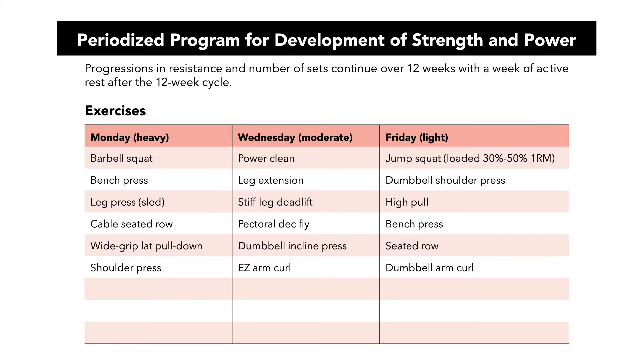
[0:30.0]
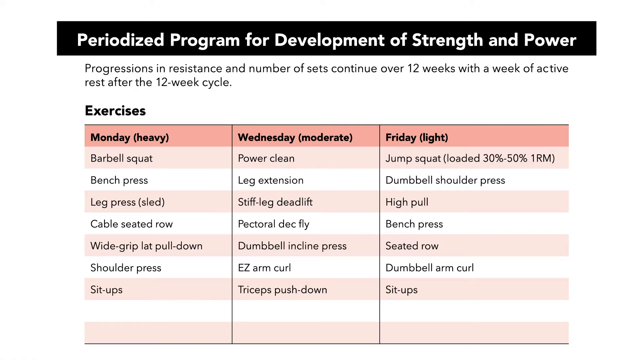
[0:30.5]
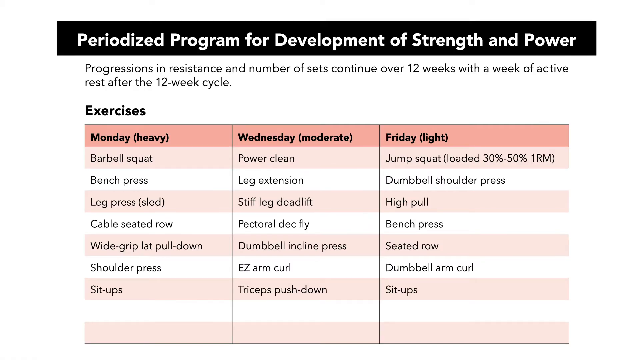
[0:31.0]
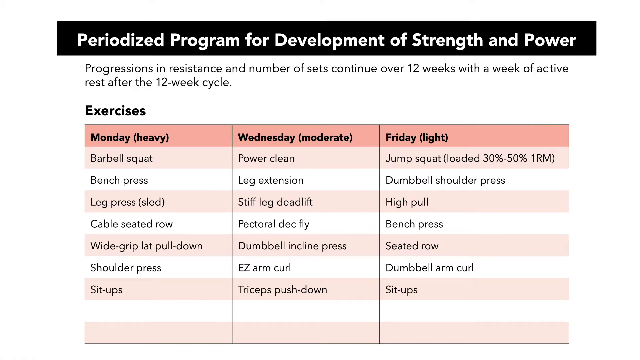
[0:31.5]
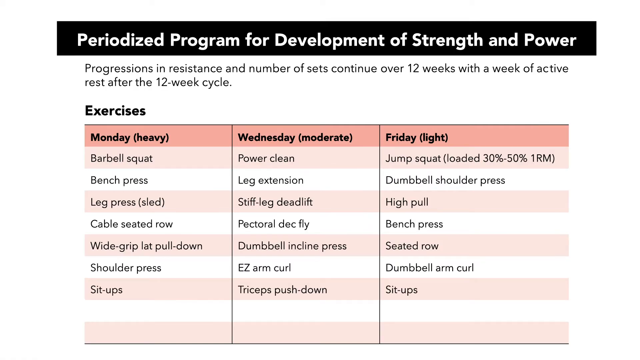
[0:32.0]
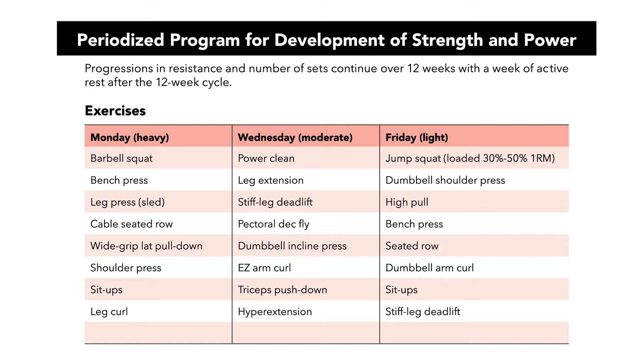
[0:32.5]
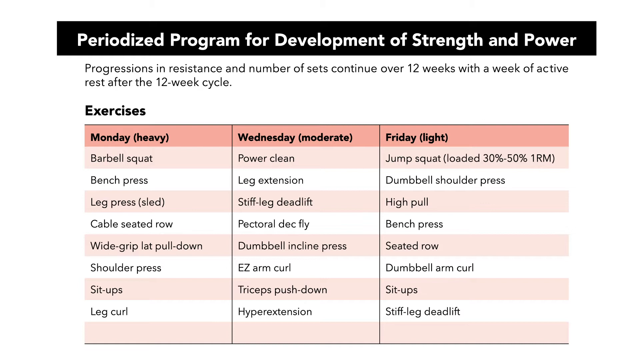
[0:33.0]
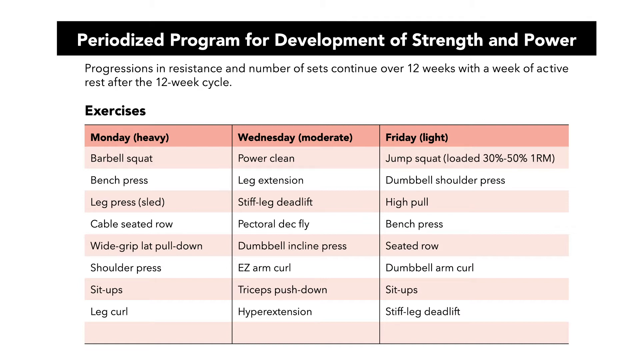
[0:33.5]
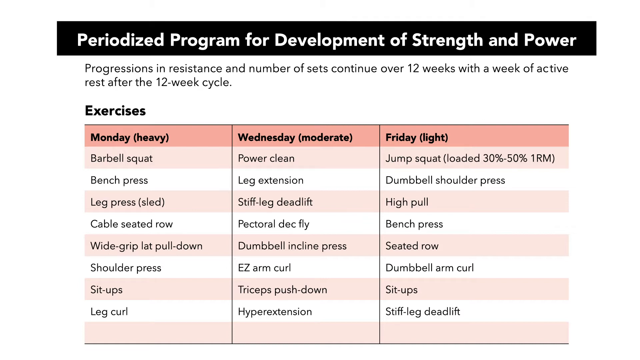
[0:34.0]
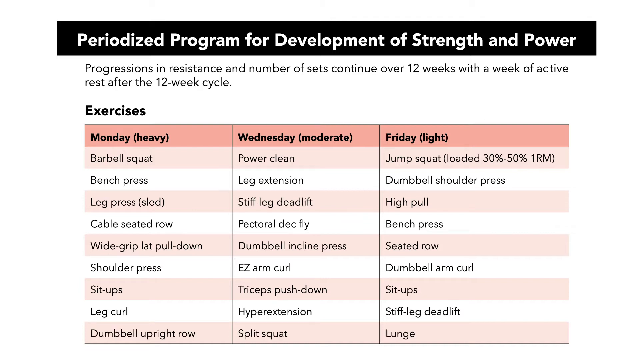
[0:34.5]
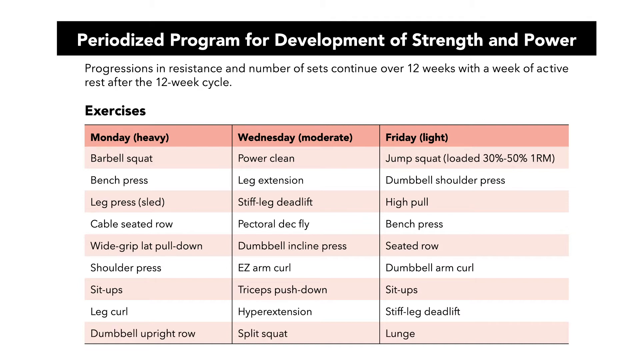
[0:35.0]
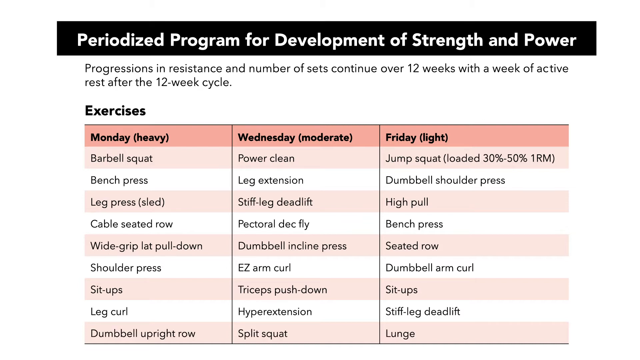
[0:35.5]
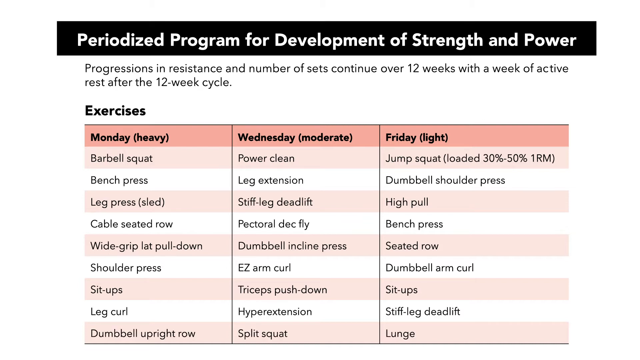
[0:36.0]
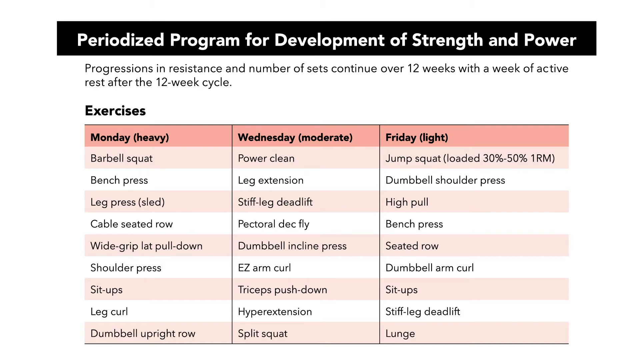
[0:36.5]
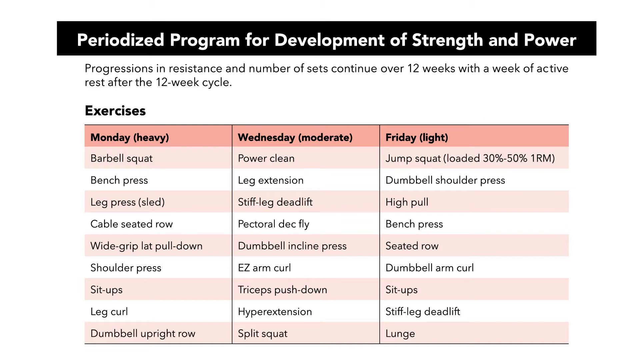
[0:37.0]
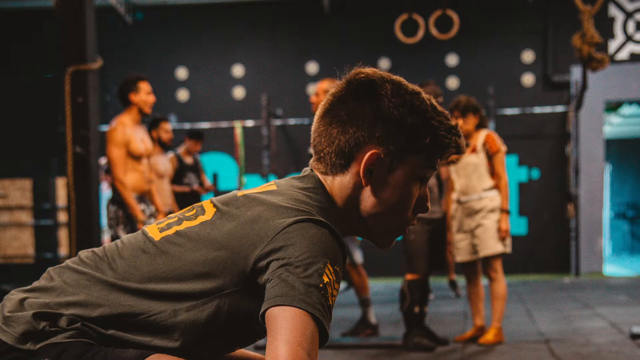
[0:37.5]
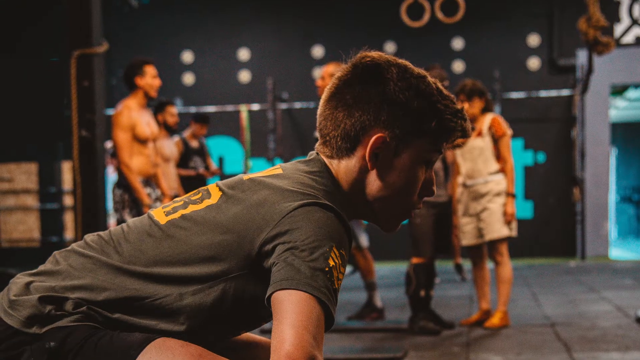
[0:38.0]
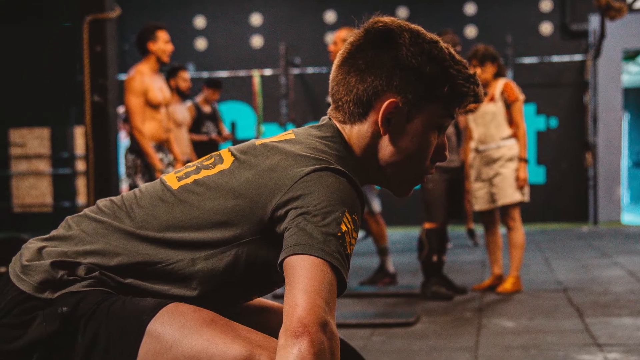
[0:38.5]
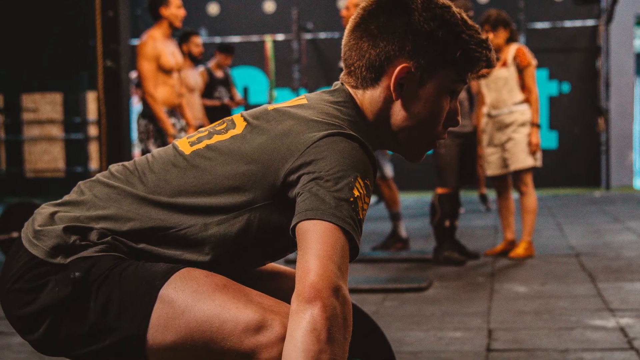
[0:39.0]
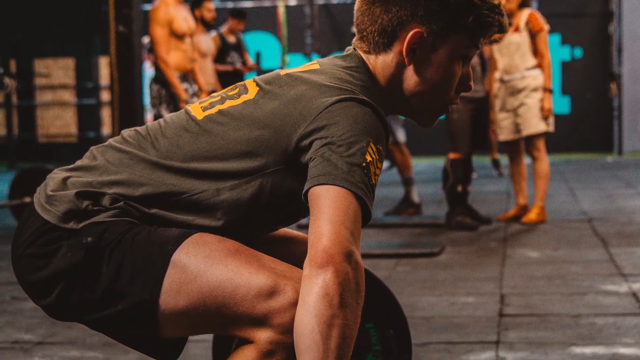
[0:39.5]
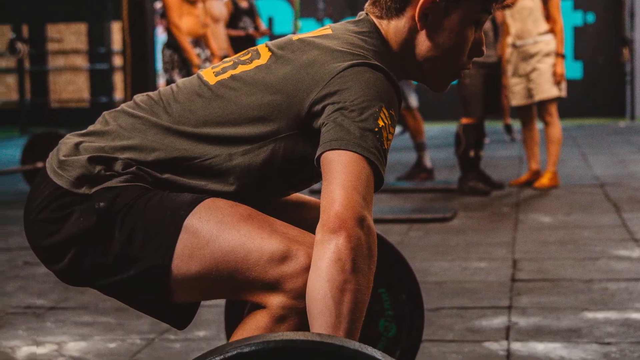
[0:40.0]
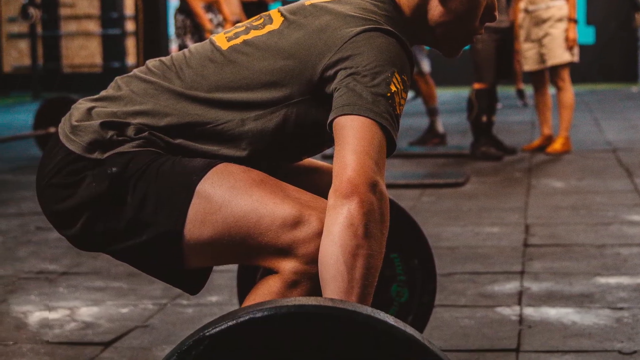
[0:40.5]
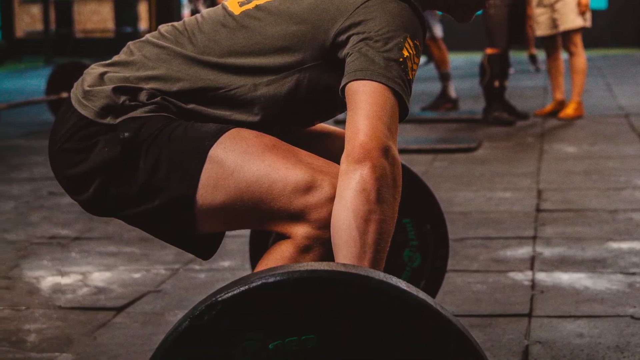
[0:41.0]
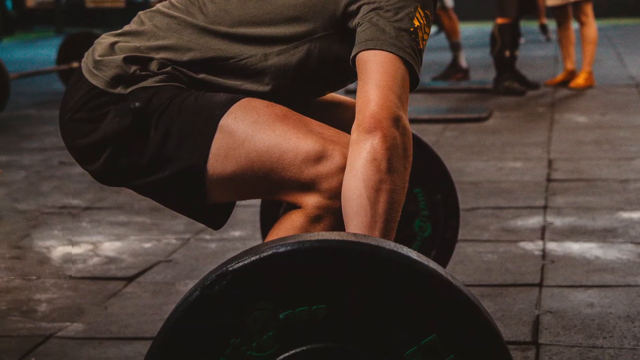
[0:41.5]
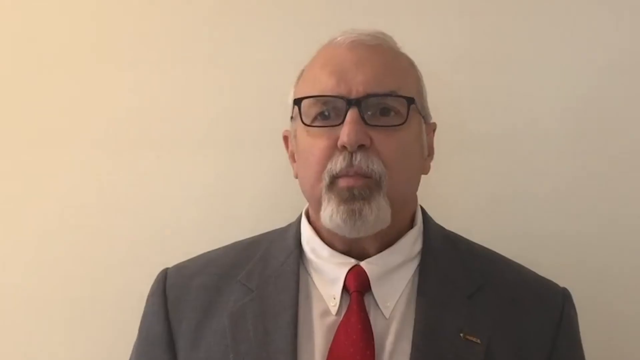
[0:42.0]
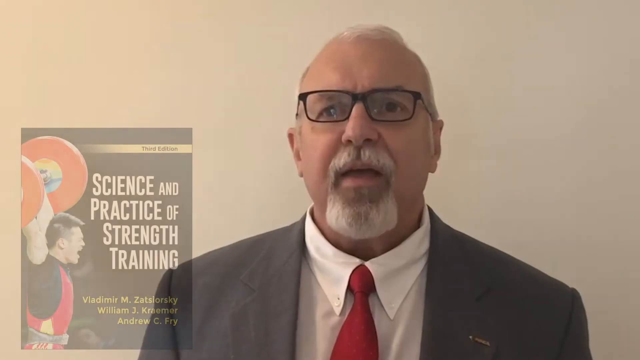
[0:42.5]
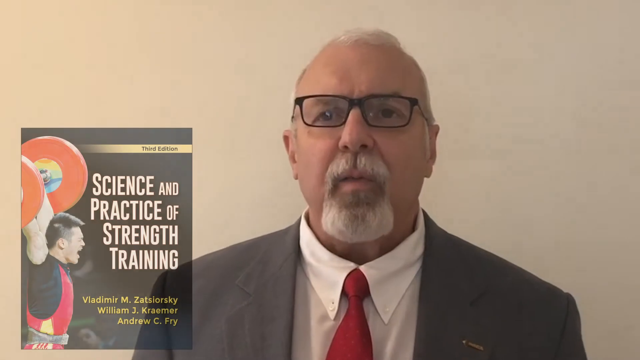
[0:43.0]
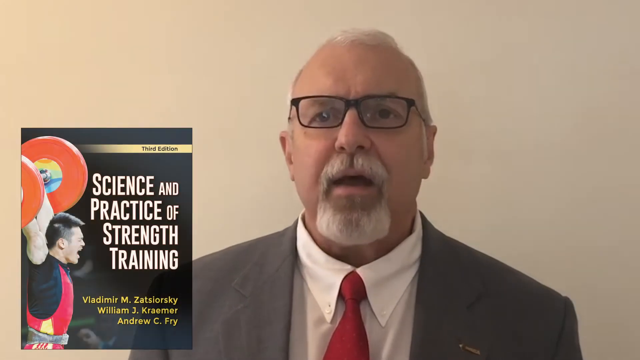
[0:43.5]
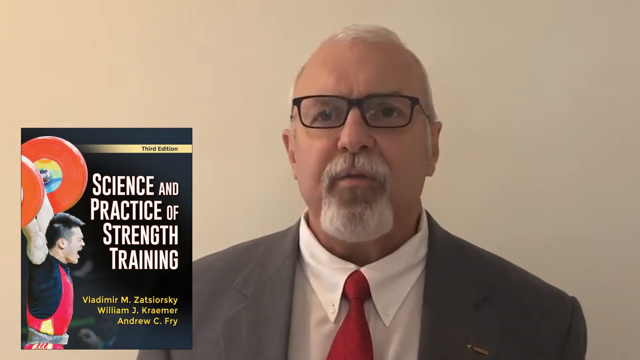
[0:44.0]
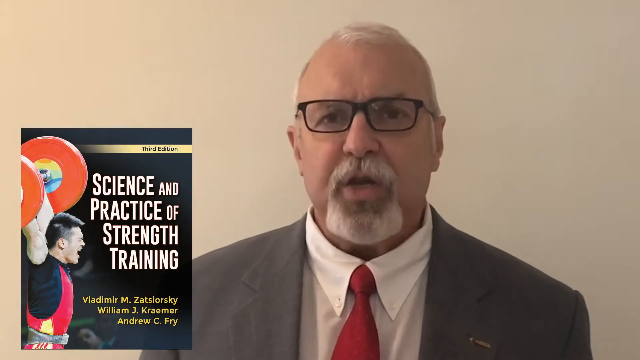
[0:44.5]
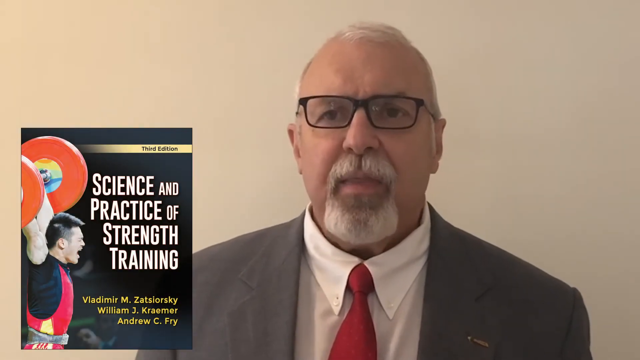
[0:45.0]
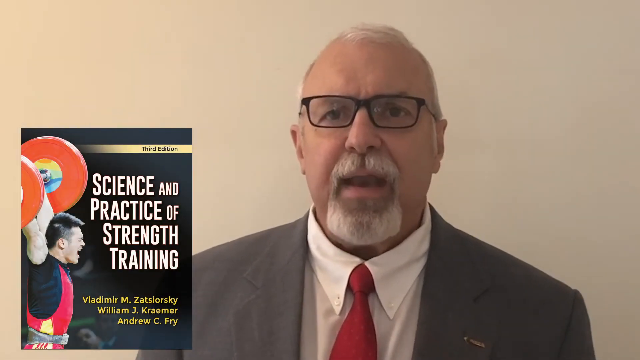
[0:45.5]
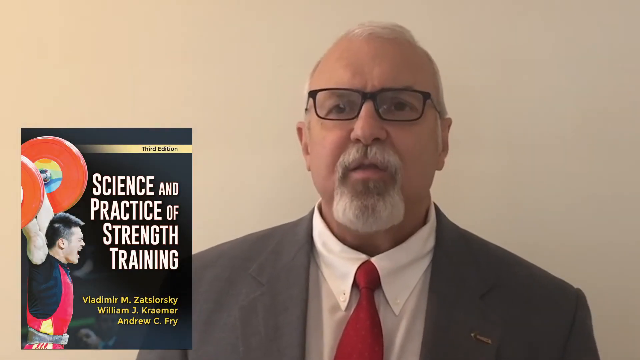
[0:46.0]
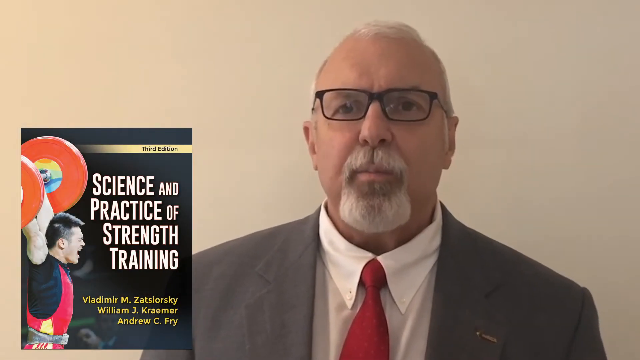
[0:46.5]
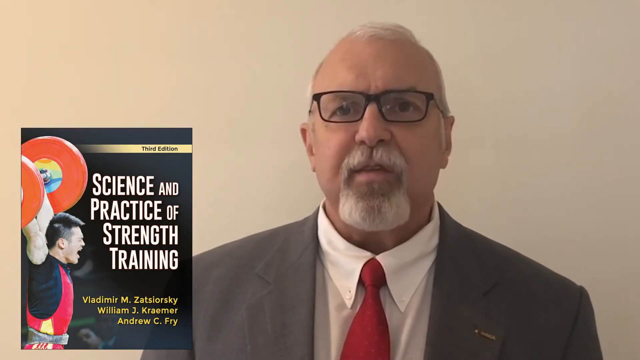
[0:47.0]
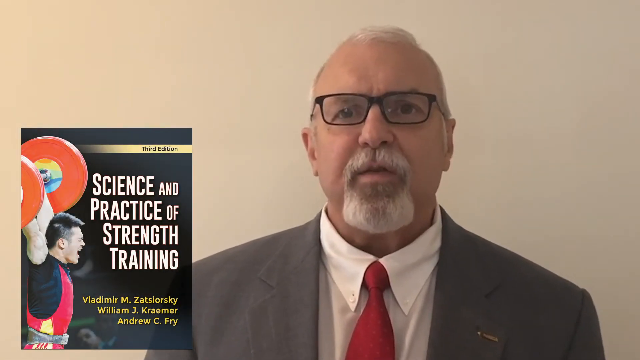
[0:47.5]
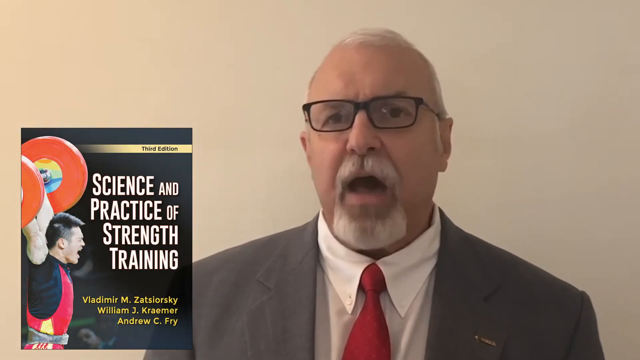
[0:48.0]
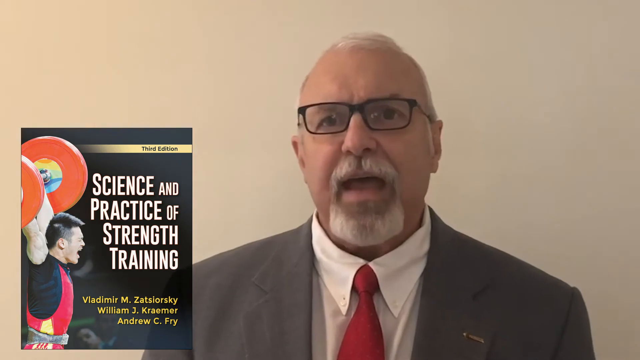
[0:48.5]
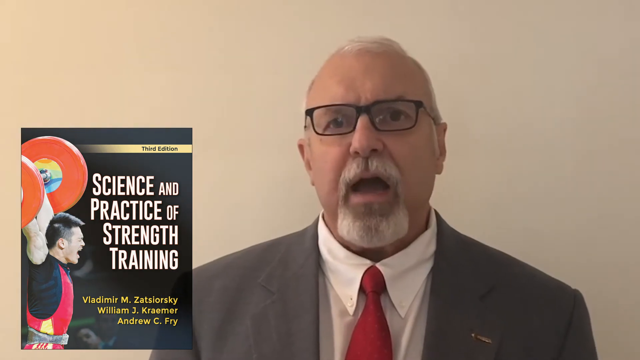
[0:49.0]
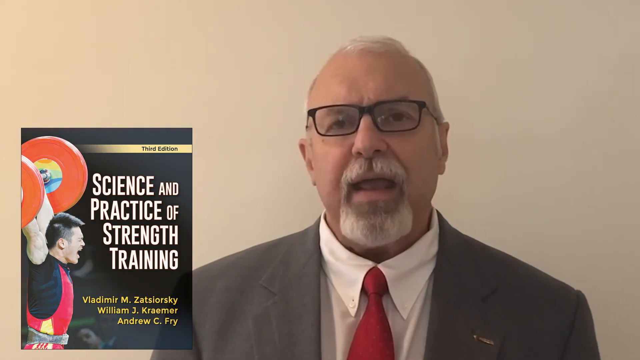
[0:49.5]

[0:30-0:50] A chart reads "periodized program for development of strength and power" at the top, in white inside a sort of black rectangle. Below that it reads "progressions in resistance and number of sets continue over 12 weeks with a week of active rest after the 12 week cycle," followed by "exercises." A sort of chart in different shades of pink lists, on the left, "Monday" with "heavy" in parentheses and exercises including barbell squat, bench press, leg press, cable seated row, wide grip lat pull down and shoulder press; another section reads "Wednesday" with "moderate" in parentheses, and the last reads "Friday" with "light" in parentheses. As the video goes on, more exercises are kind of added to each day. Next is an image of a sort of younger man leaning downward, grabbing a barbell and squatting, in a room with other athletes in the background. The video then goes to an older man with glasses and a beard, wearing a gray suit, a white shirt and a red tie. On the left is a sort of cover of the book reading "the science and practice of strength training," showing a man holding up a sort of orange barbell.